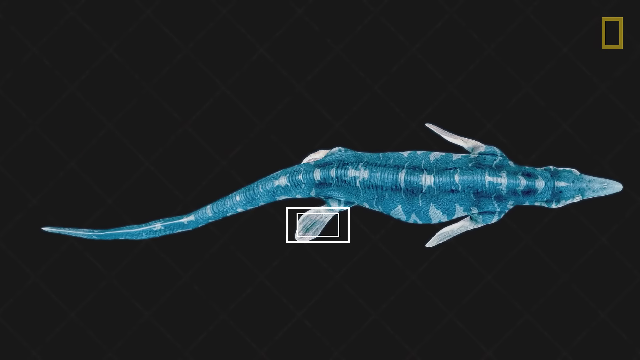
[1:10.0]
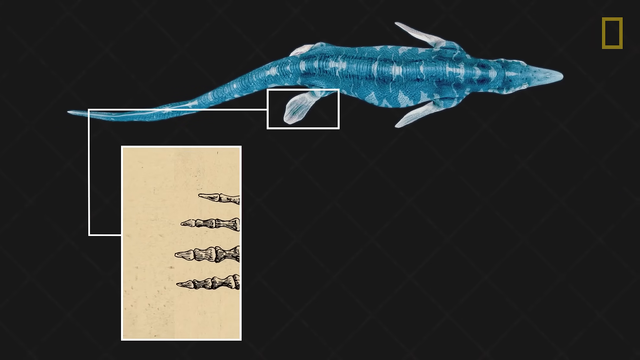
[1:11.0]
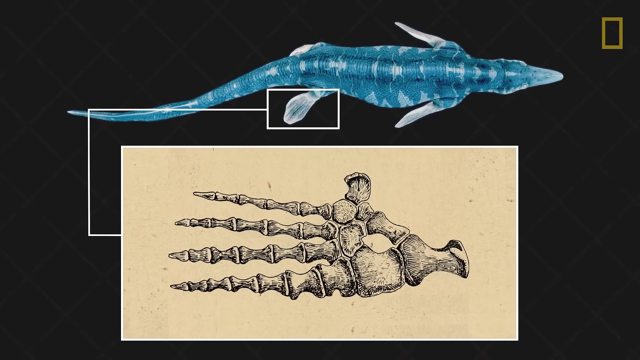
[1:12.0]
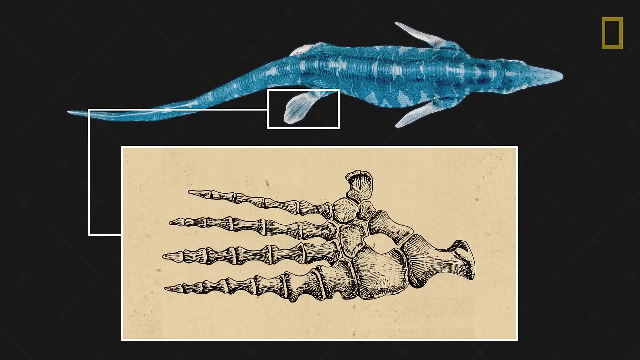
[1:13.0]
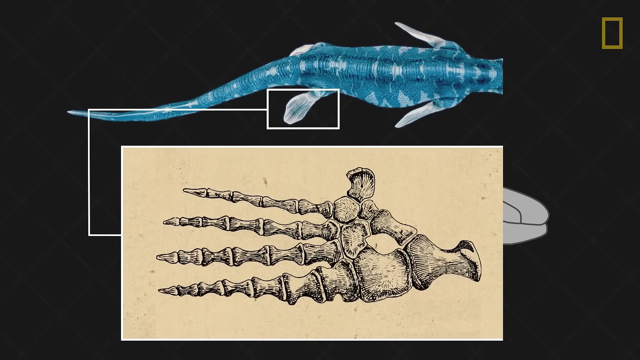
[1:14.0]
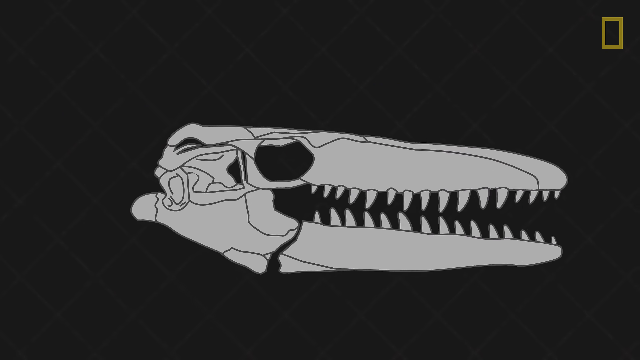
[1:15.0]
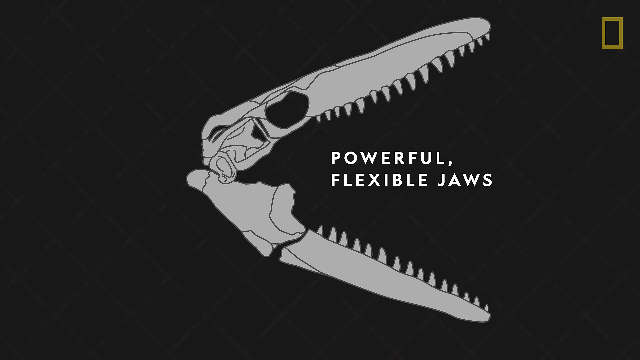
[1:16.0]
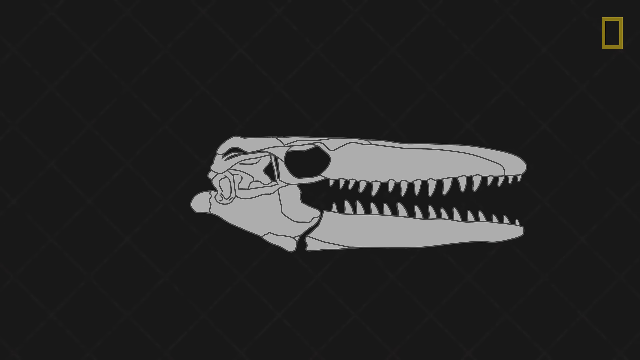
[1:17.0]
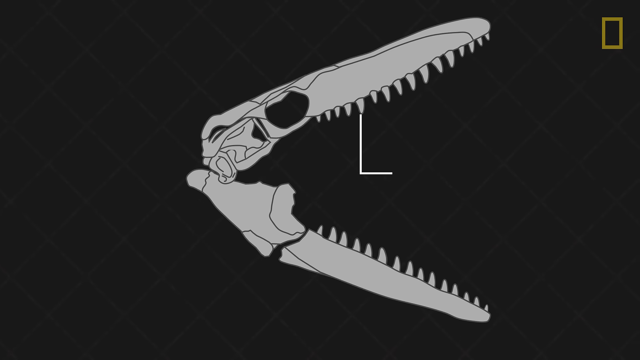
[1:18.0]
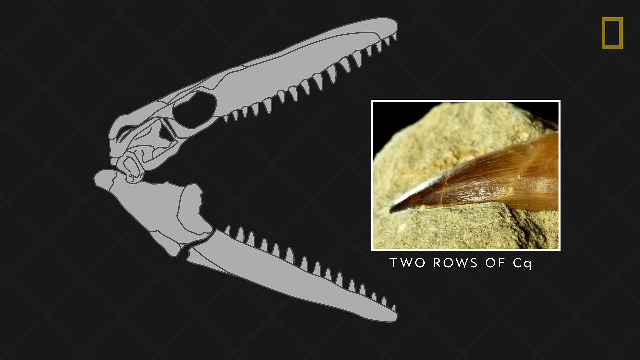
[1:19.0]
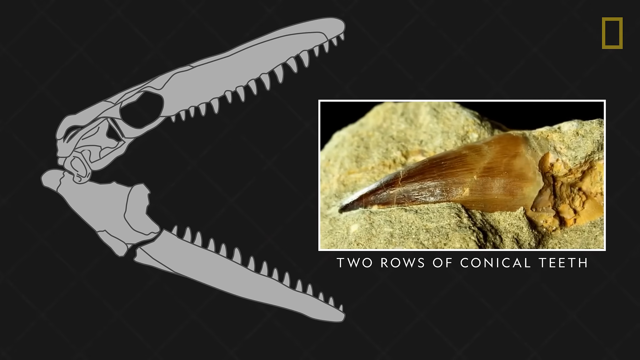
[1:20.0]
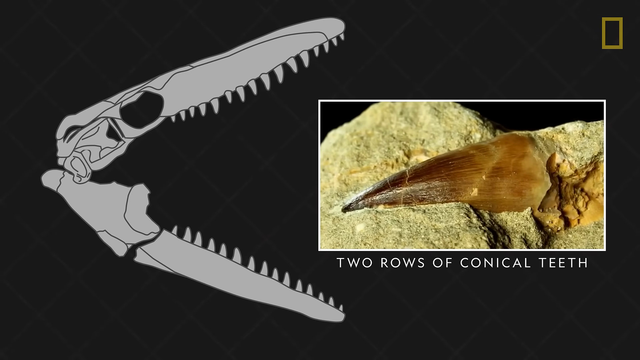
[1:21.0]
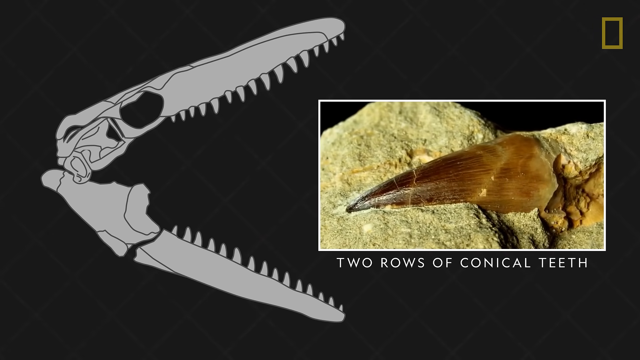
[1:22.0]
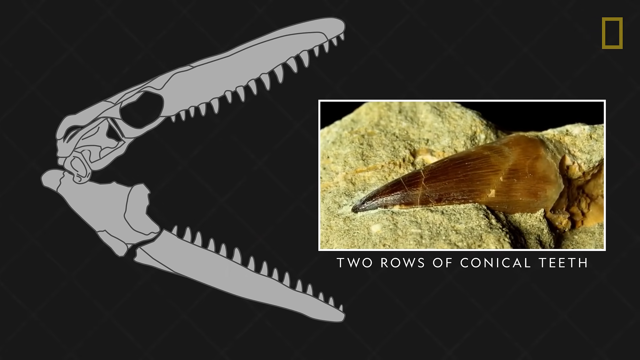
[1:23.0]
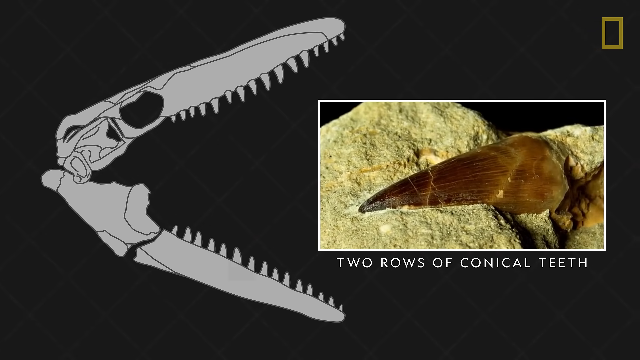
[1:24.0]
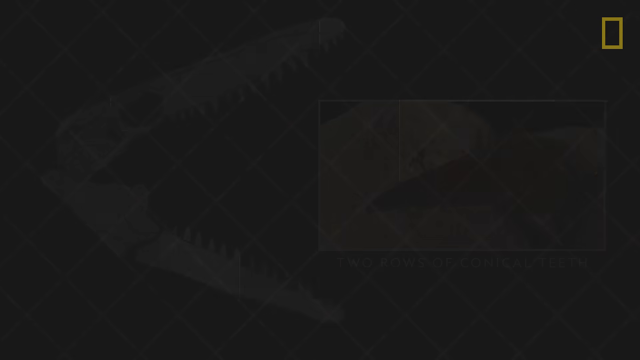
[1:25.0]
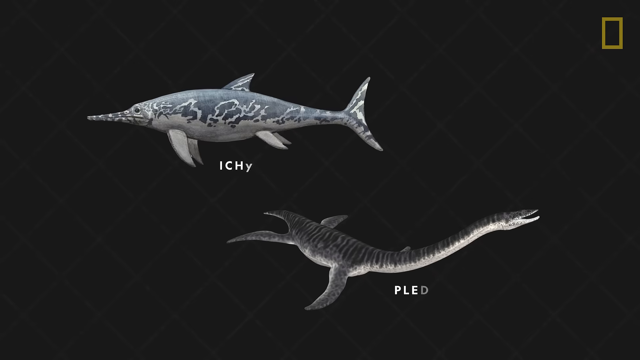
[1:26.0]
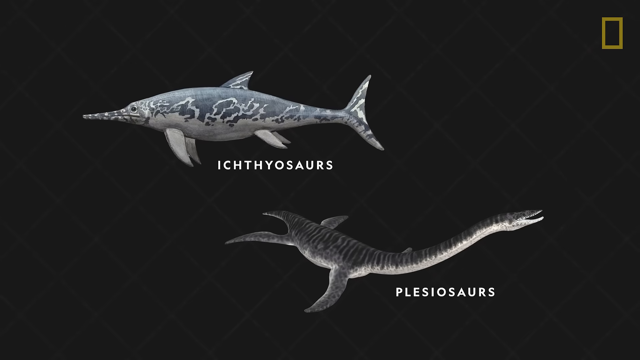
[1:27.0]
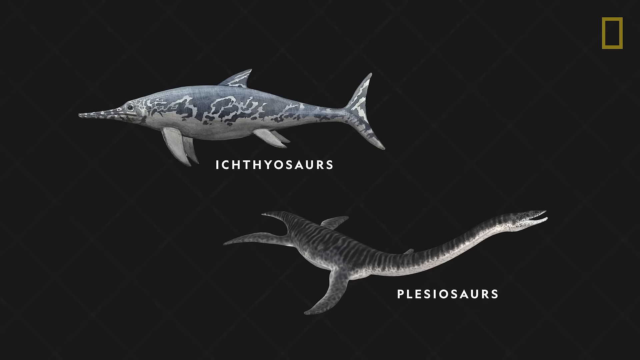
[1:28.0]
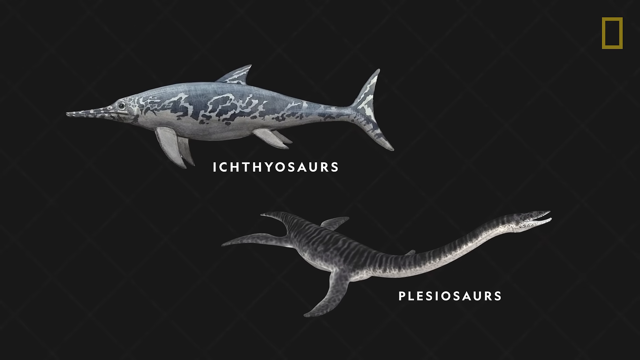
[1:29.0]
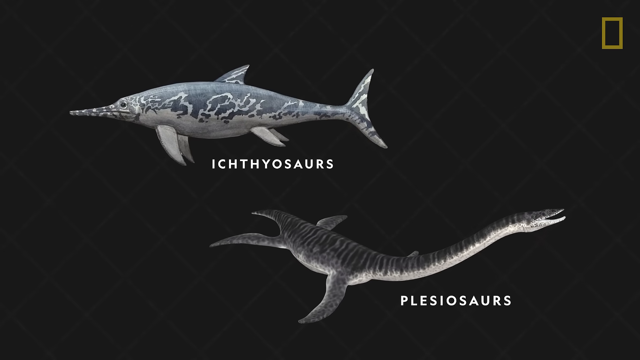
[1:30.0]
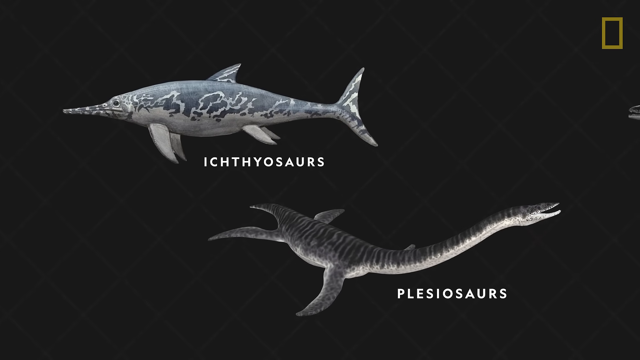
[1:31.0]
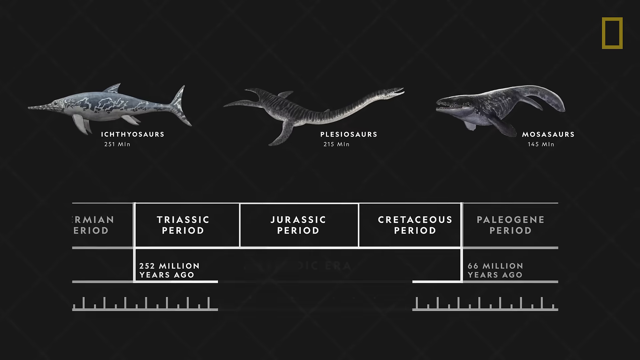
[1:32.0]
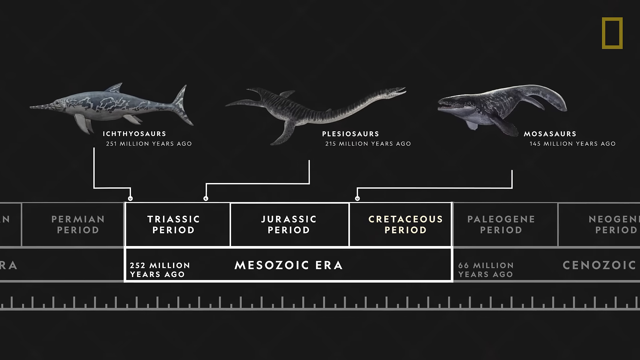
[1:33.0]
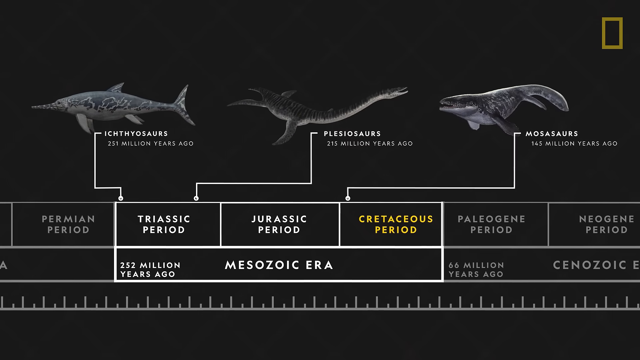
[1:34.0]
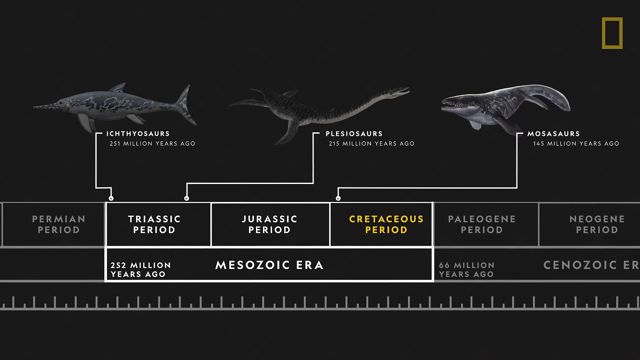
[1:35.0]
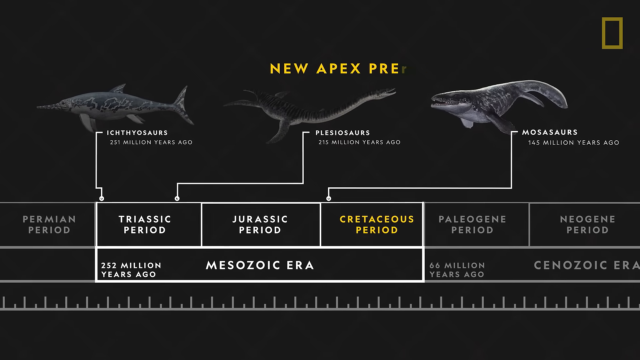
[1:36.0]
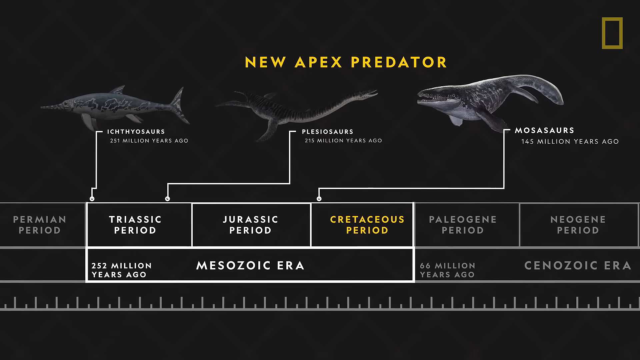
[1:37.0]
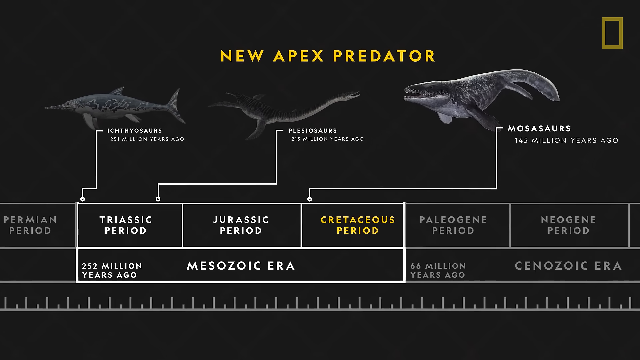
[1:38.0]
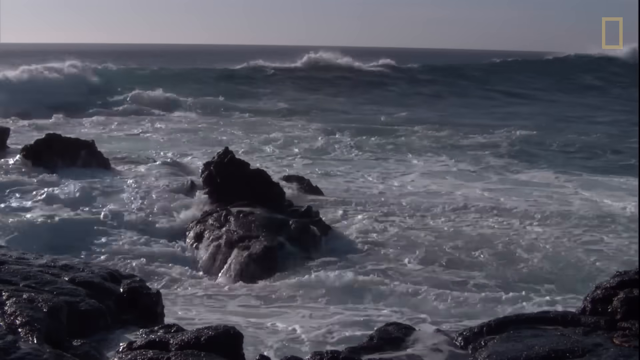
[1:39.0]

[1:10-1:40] The animal's mouth is shown, and it seems very strong and powerful. The words "Mesozoic era" are visible, and ocean waves appear.